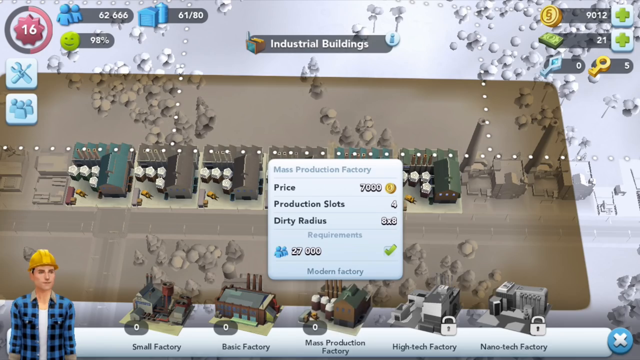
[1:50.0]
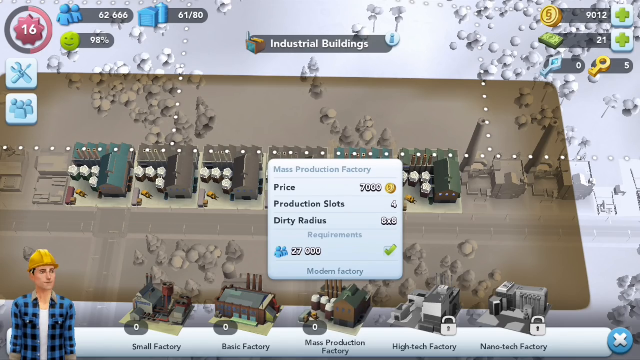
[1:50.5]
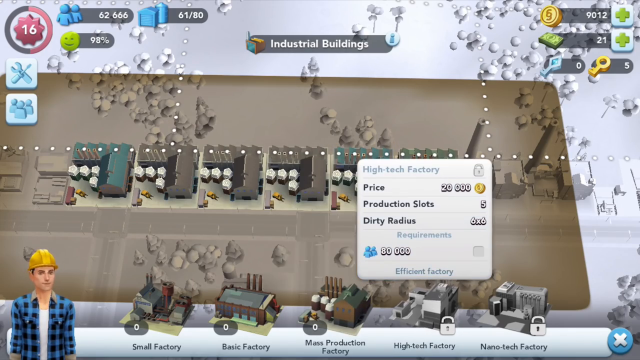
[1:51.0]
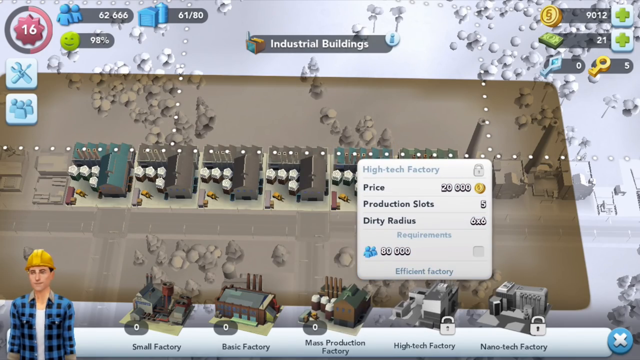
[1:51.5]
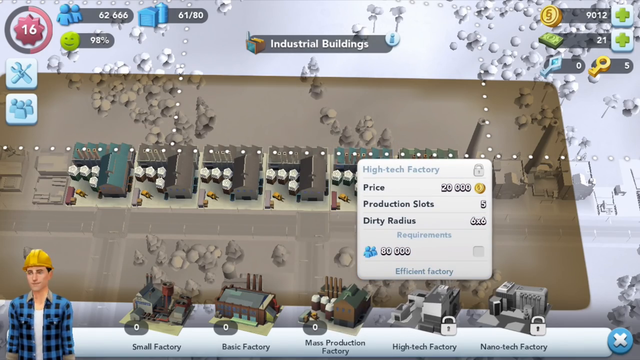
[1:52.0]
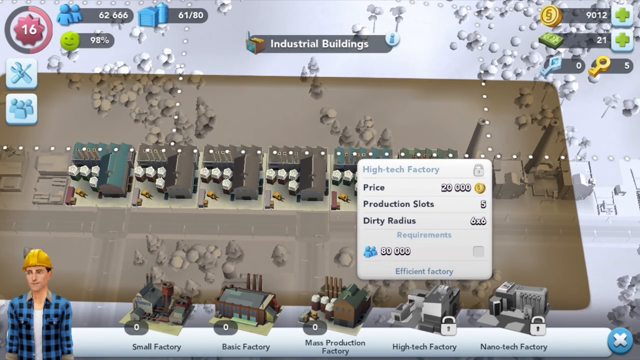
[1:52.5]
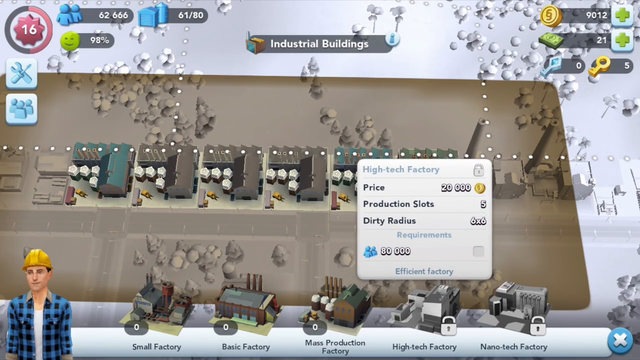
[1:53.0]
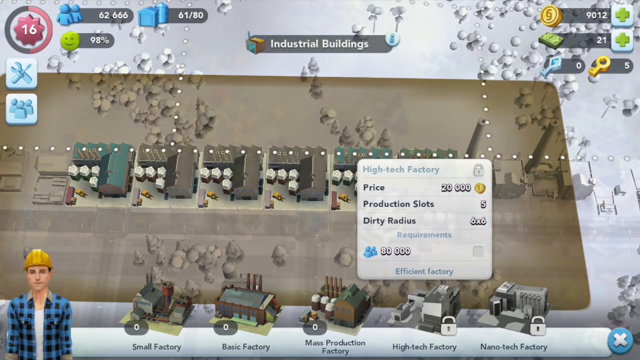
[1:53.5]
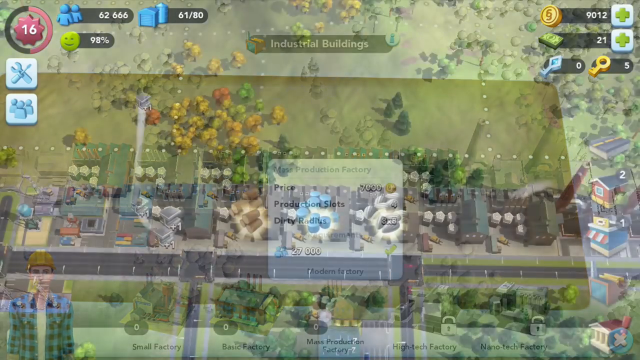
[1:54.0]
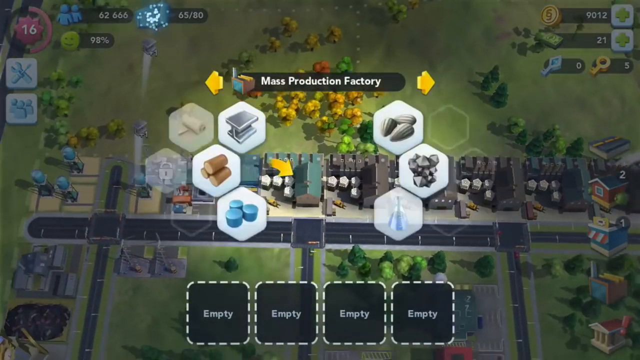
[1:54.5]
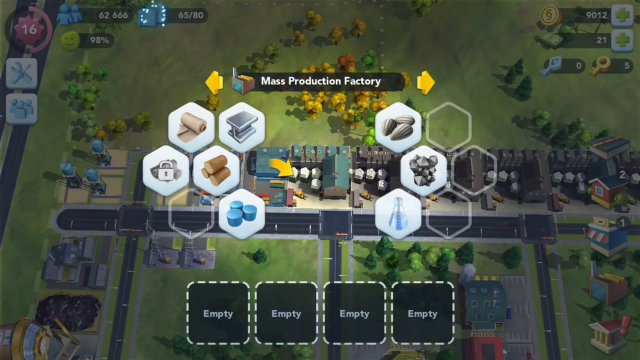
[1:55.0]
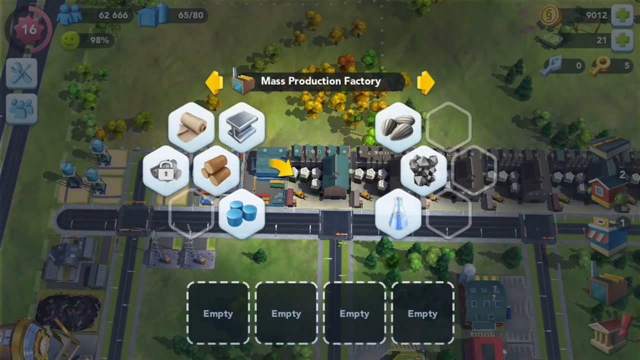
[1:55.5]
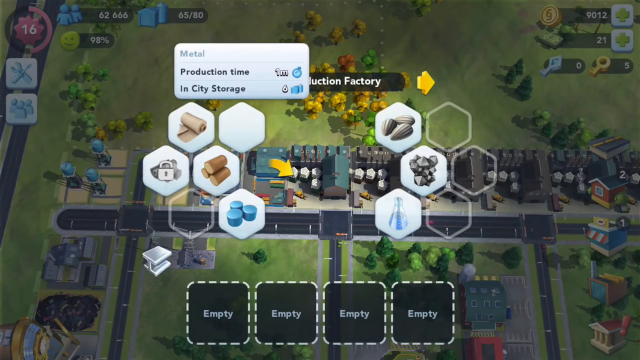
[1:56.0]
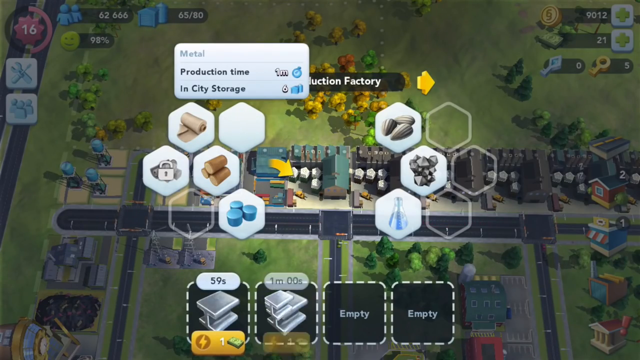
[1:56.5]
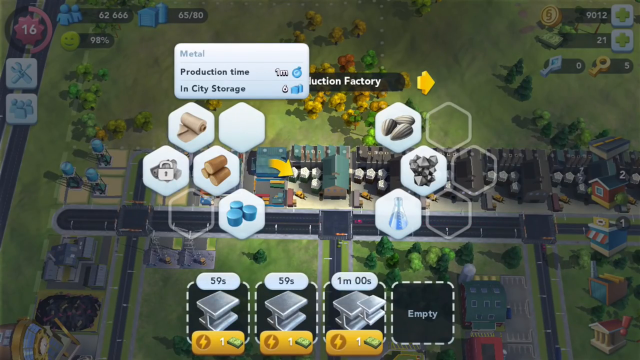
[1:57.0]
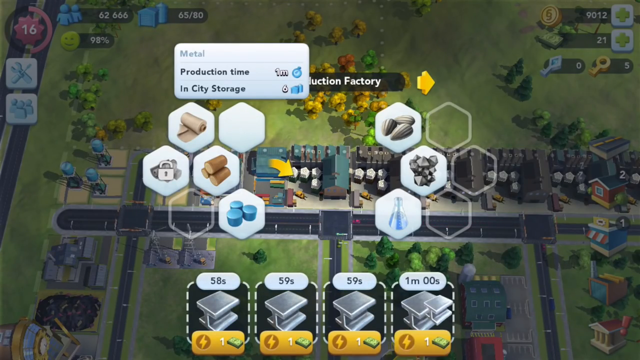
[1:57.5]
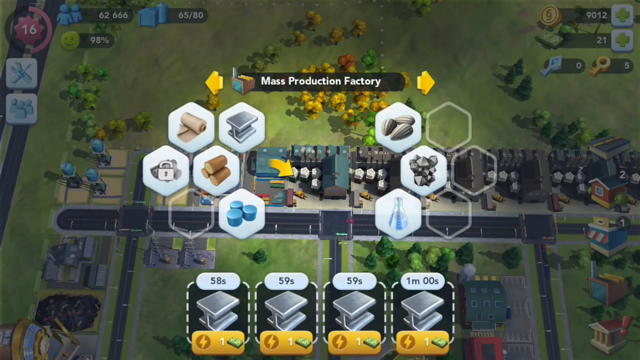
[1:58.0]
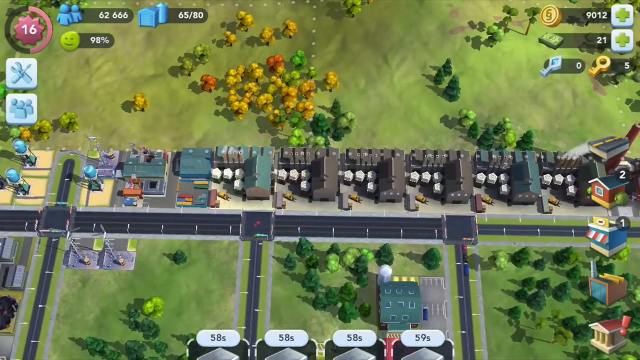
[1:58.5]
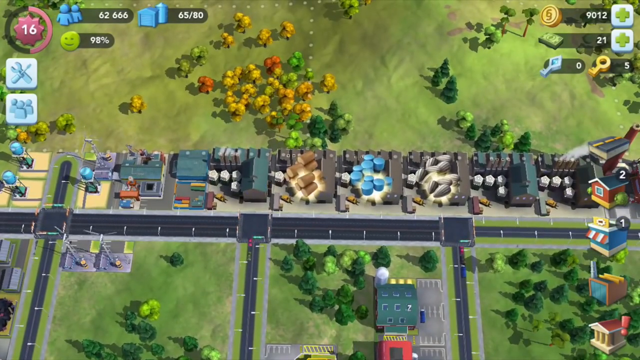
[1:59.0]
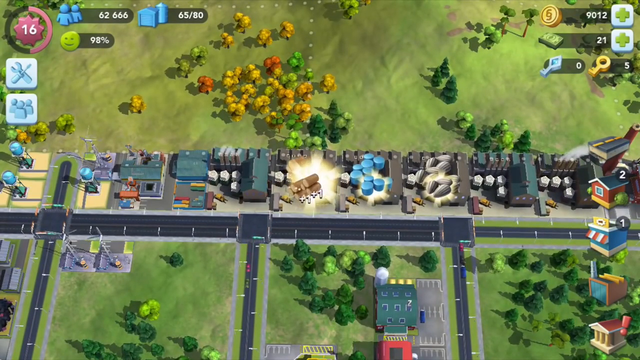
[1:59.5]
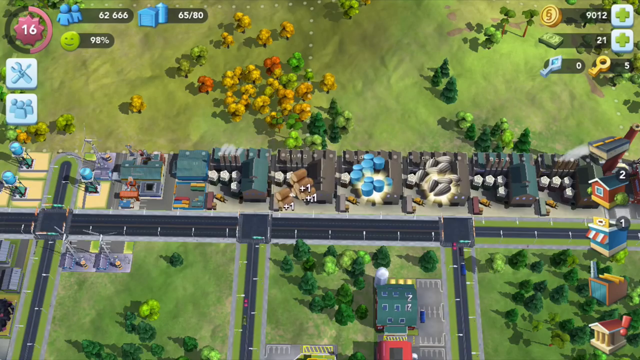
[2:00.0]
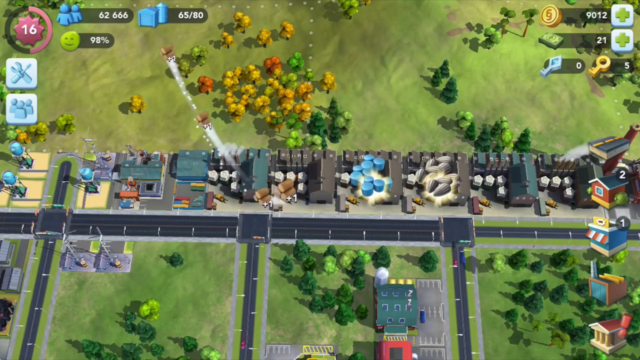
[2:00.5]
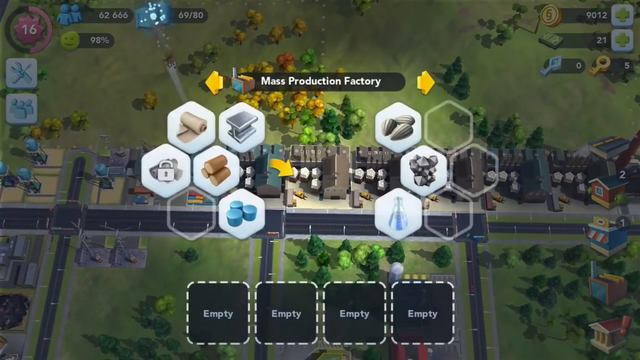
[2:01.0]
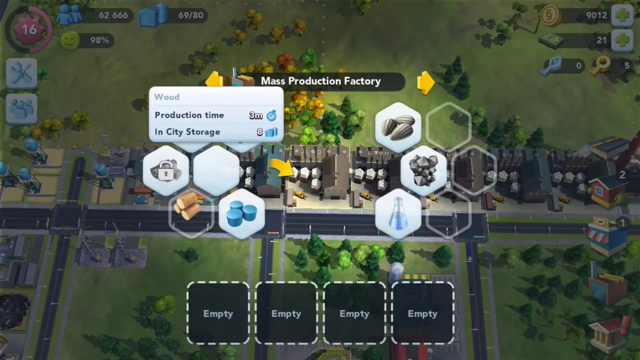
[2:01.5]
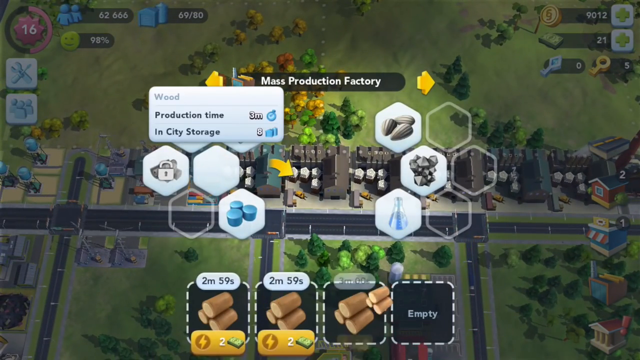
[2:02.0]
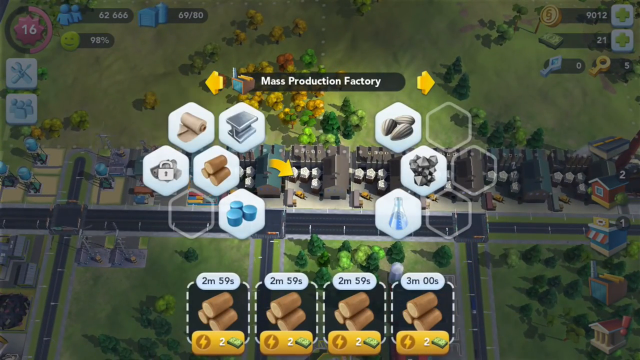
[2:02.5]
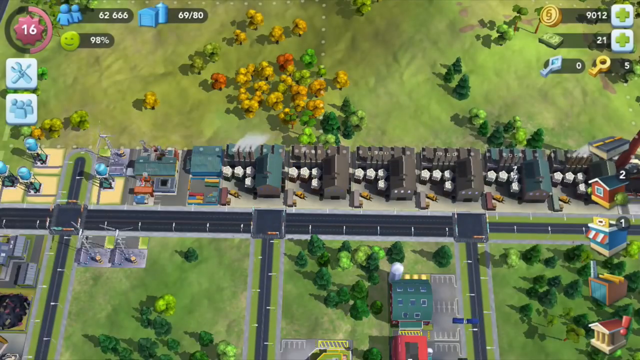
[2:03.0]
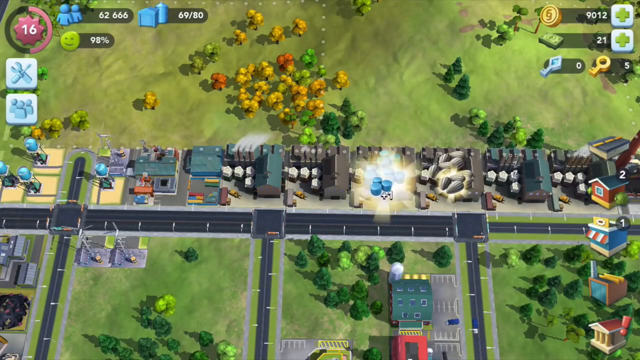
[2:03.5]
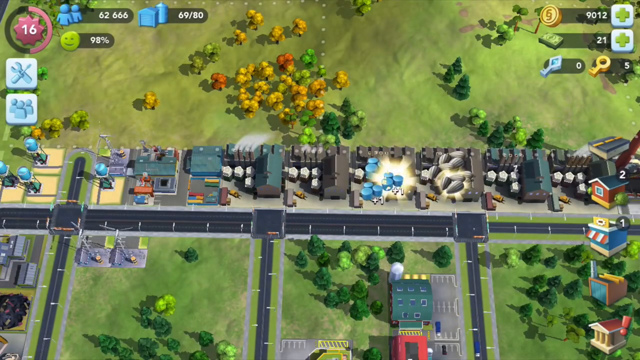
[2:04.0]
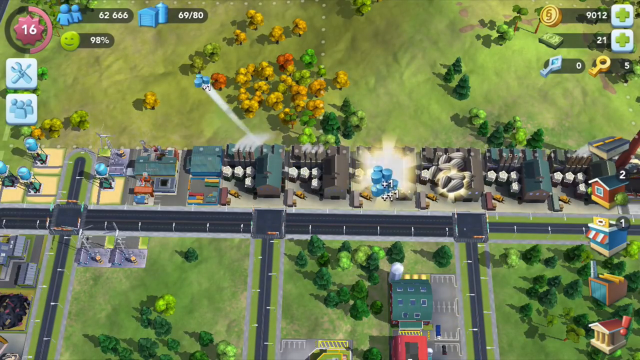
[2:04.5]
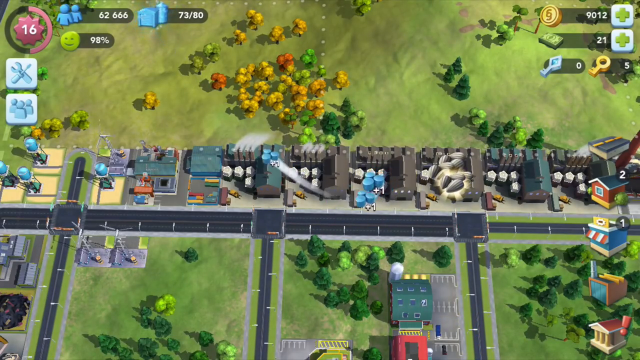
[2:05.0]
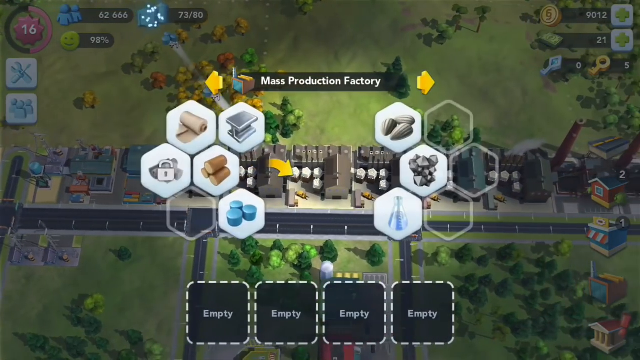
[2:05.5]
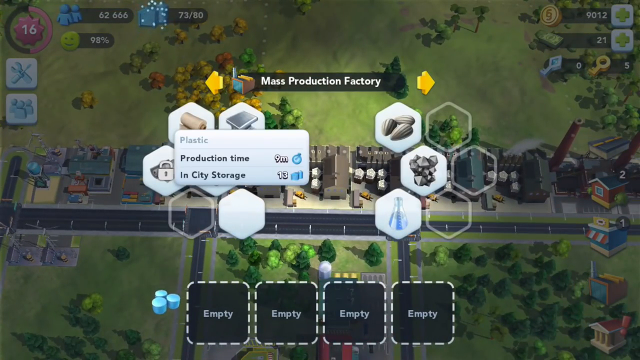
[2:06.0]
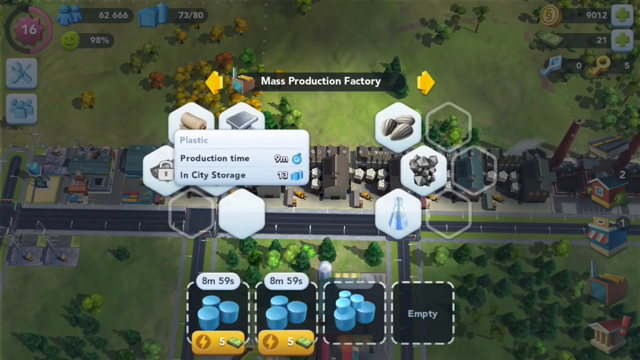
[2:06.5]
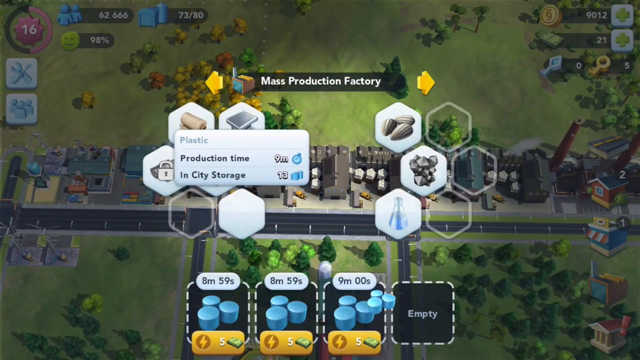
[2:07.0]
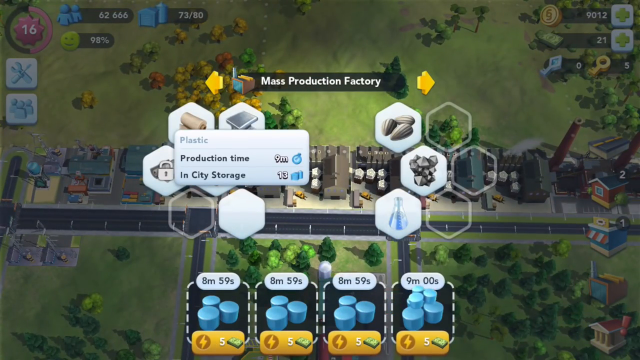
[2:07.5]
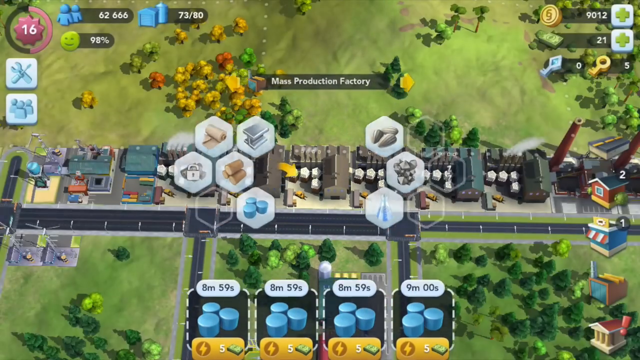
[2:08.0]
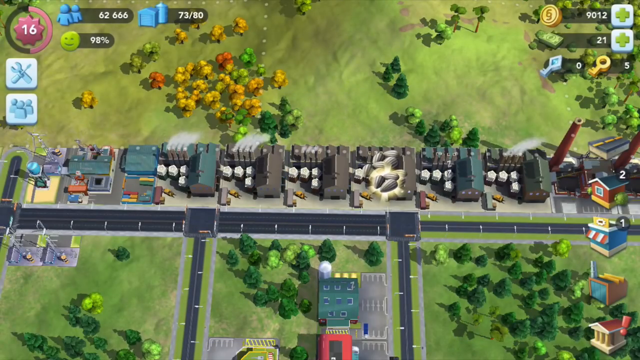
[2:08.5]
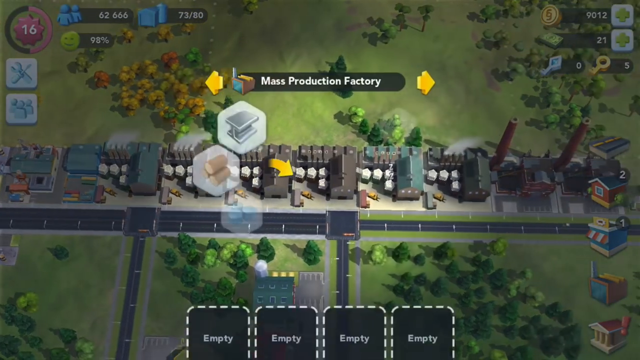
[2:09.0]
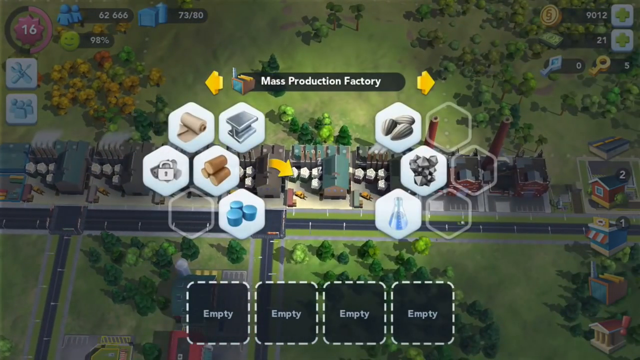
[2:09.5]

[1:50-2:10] The resources are in the industrial buildings section of the city, highlighted in a grayish black color, while the regular ground of the city is whitish, as if it were wintertime. The player goes over the prices of the resources and selects something; lights come out of the building apparently selected and go to the resources at the top. The cursor scrolls down to the bottom, showing what looks to be metal, possibly silver, with timing in seconds above the items. The player clicks on the wood three times, and it goes up to the top, then moves to the right and clicks on the plastic to bring it up. The player appears to be just looking at the resources, which have prices and production times next to them. At the bottom of the screen are some of the times it will take to complete projects.